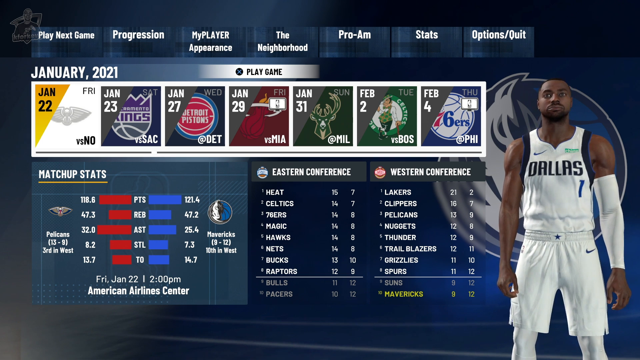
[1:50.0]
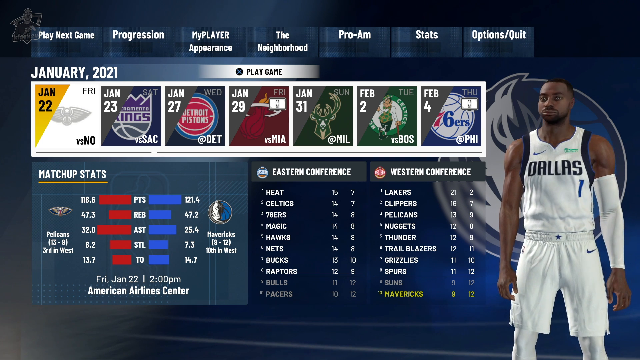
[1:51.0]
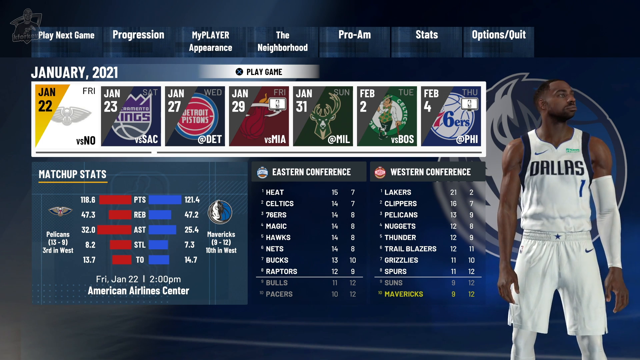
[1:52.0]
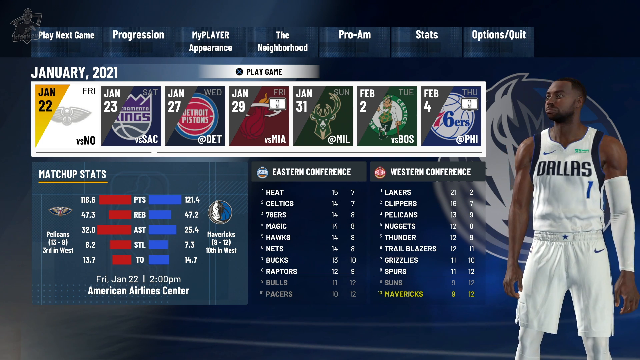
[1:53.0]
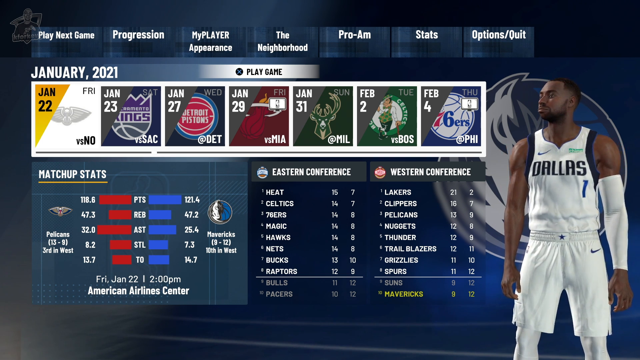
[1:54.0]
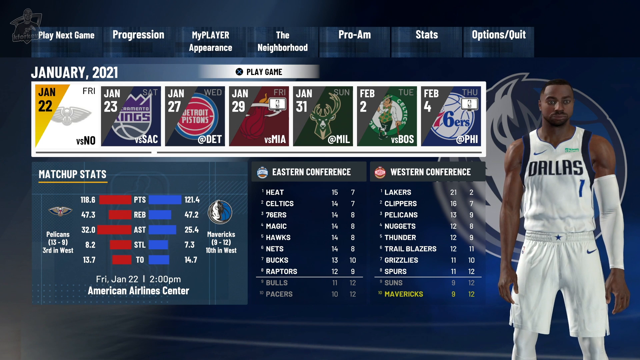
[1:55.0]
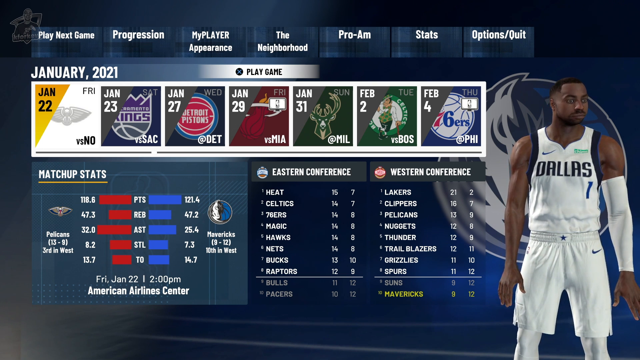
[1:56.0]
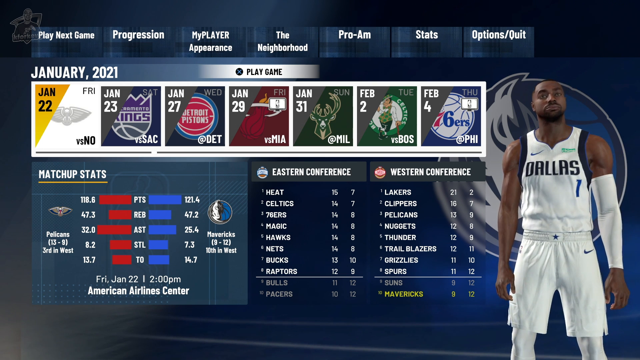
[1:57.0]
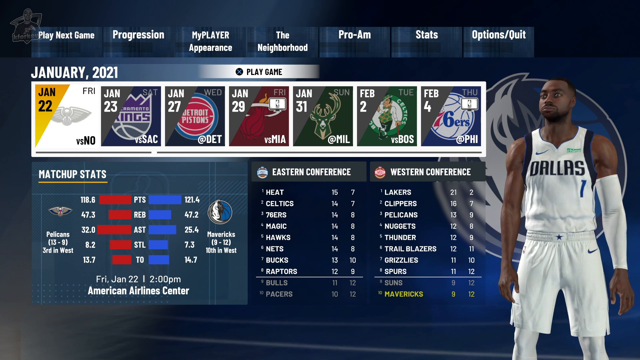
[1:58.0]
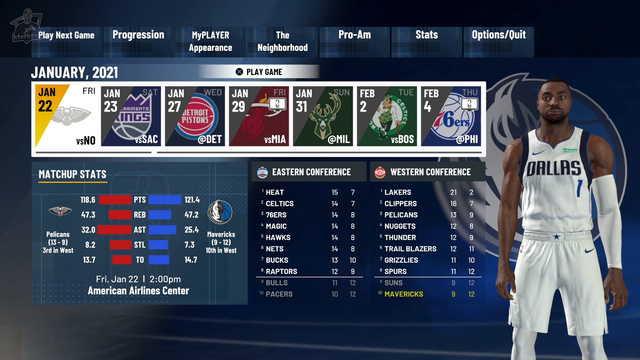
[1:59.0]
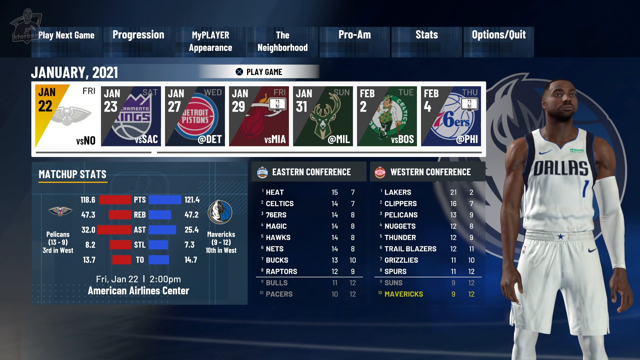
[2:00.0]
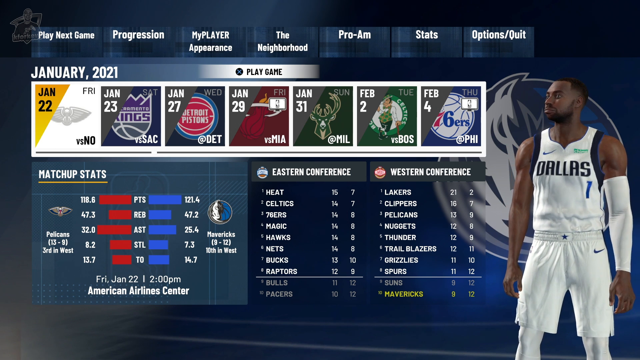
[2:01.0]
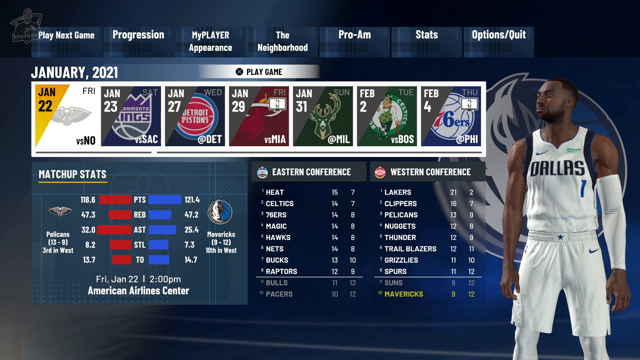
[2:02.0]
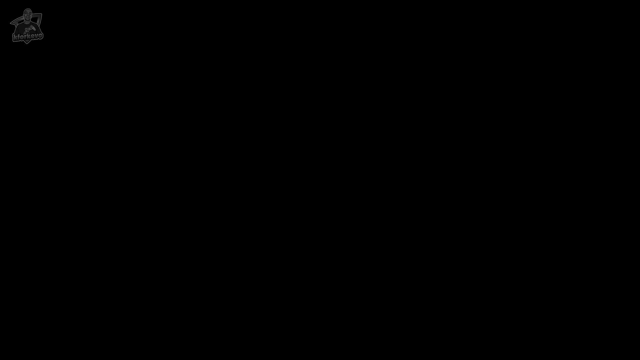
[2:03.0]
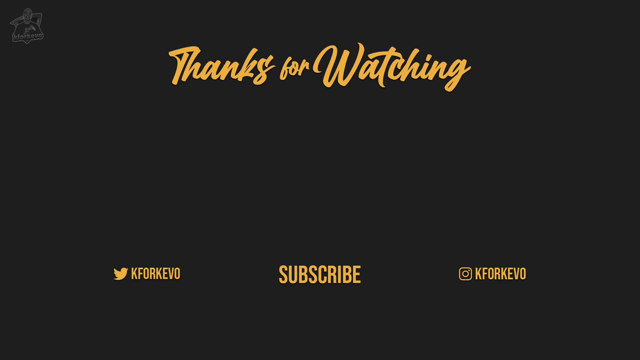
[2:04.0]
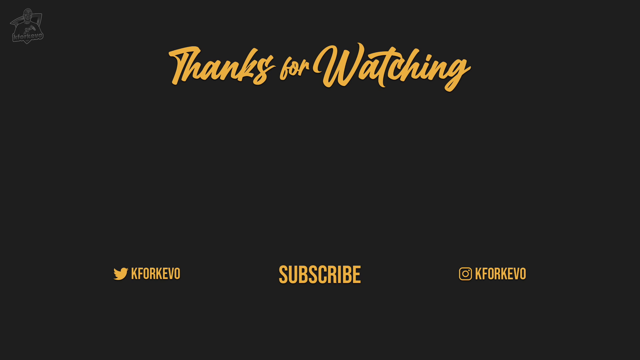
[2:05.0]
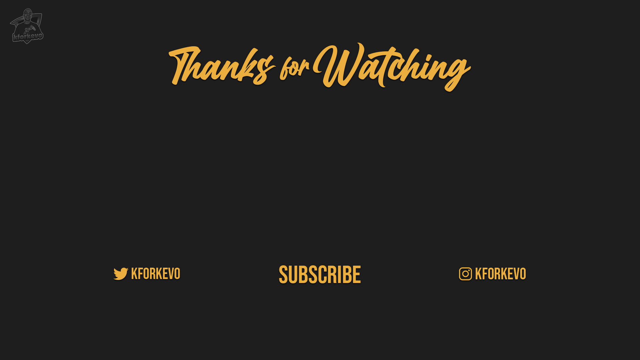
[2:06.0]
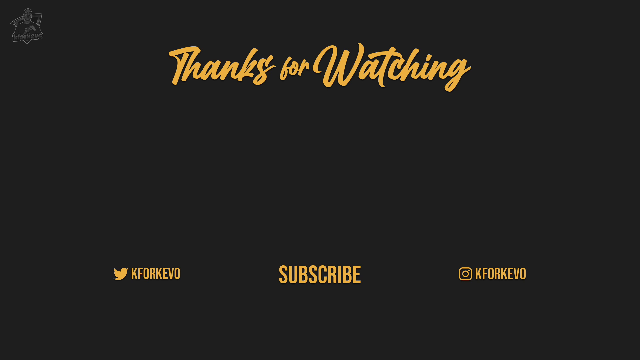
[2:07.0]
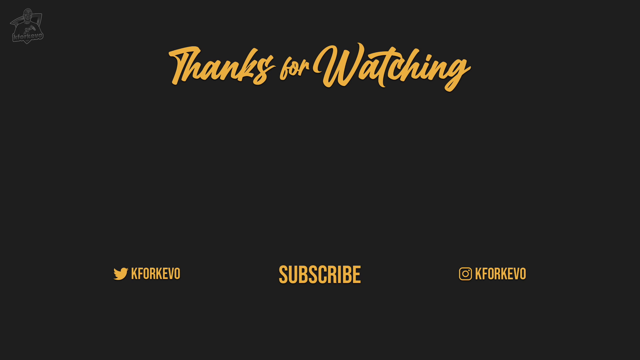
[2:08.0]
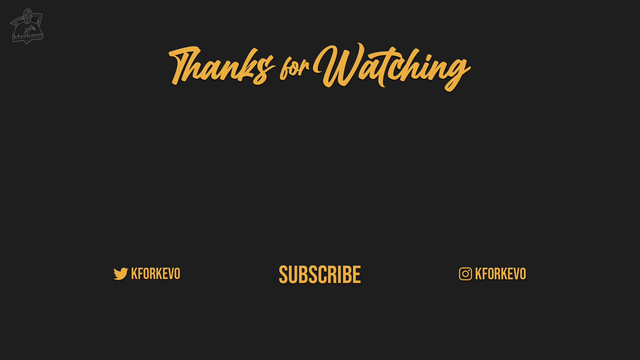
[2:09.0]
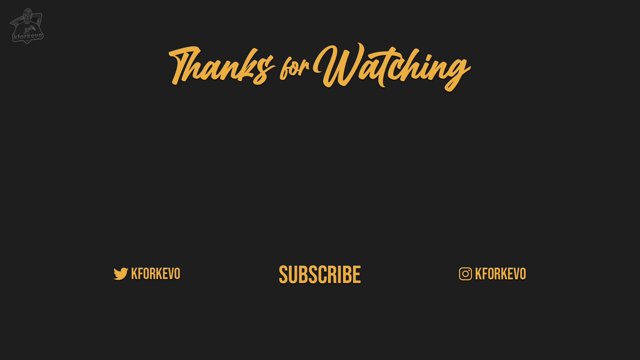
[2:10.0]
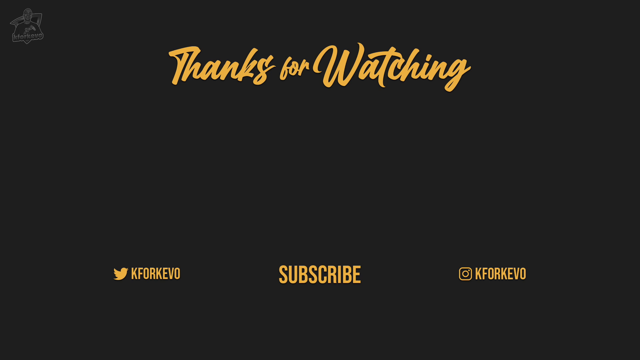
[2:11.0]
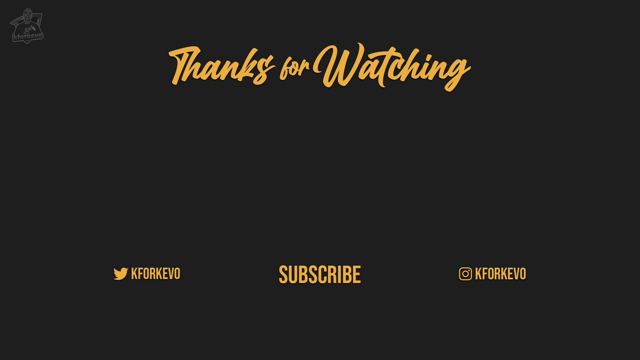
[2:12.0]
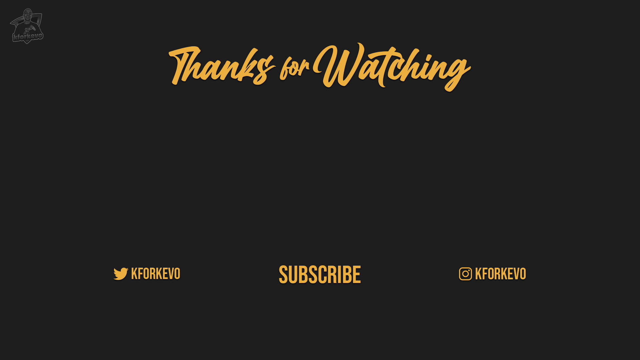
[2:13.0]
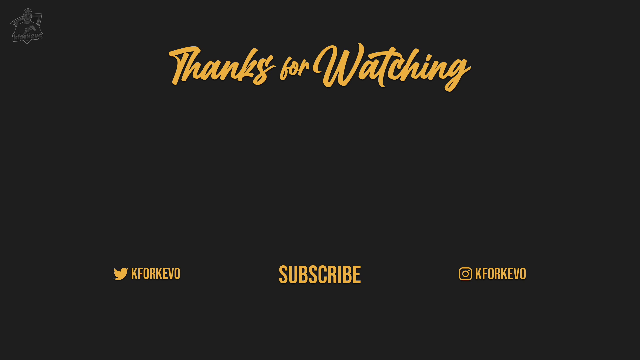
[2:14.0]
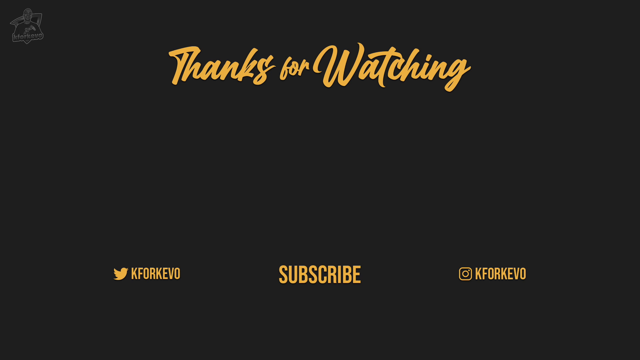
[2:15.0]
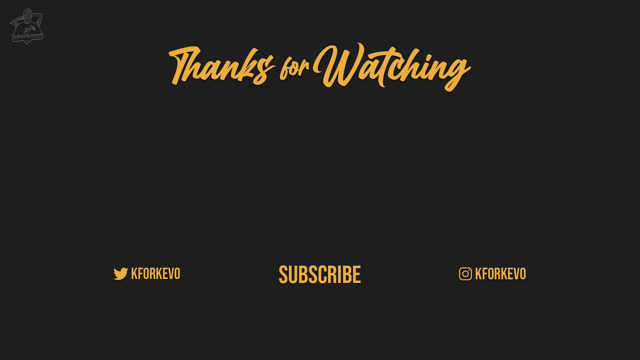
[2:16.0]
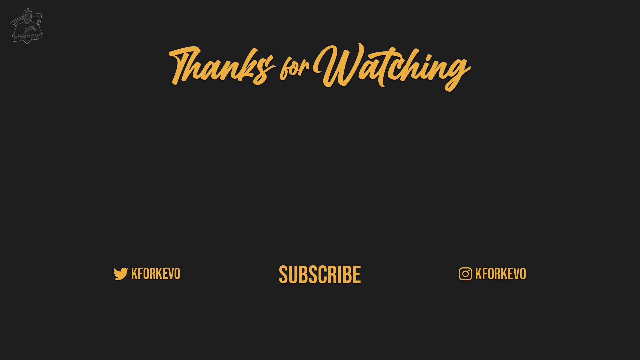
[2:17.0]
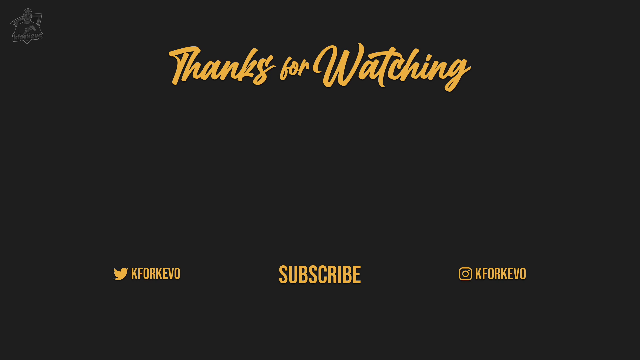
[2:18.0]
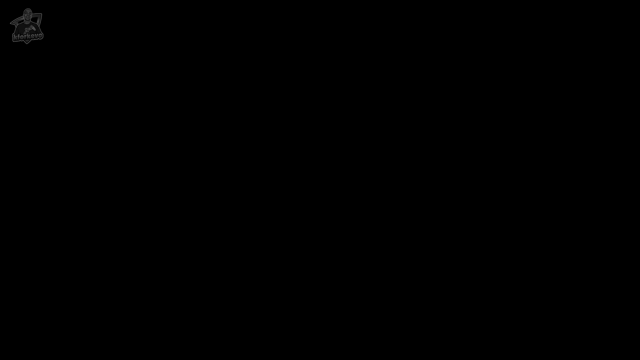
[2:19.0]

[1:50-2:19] The video stays at a menu in an NBA game, followed by an outro screen. Headers or main tabs across the top show white text on blue rectangles: "Play Next Game", "Progression", "My Player Appearance", "The Neighborhood", "Pro-Am", "Stats" and "Options/Quit". White text at the top left of the main menu reads "January 2021", above seven squares with different dates at the top left and teams at the bottom right. The leftmost reads January 22nd versus New Orleans and is yellow because it is currently highlighted; the others read January 23rd versus Sacramento, January 27th at Detroit, January 29th versus Miami, January 31st at Milwaukee, February 2nd versus Boston and, on the right, February 4th at Philadelphia. Below them are charts of matchup stats and the Eastern Conference and Western Conference rankings. On the right is what looks like the player's avatar: a black man wearing a white sleeve on his left arm and a white uniform with "Dallas" across the chest and the number one, in Dallas Mavericks colors, with a Dallas Mavericks icon behind him. The avatar is just looking slightly around to the left and the right, his fingers wiggling a little. Nothing else happens on this screen. Finally an outro appears: a black screen with yellow text at the top reading "thanks for watching", a Twitter bird with "K for Kevil" at the bottom left, "subscribe" at the bottom middle, and an Instagram logo with the text "K for Kevil" at the bottom right.